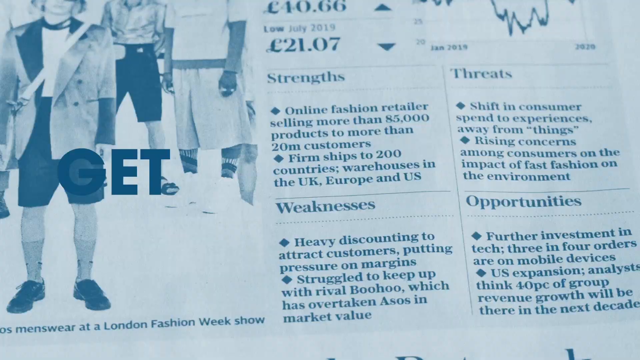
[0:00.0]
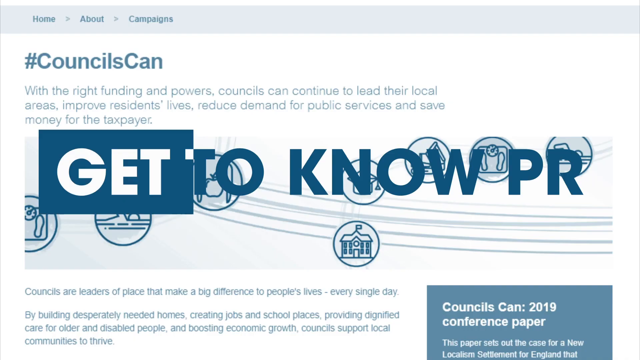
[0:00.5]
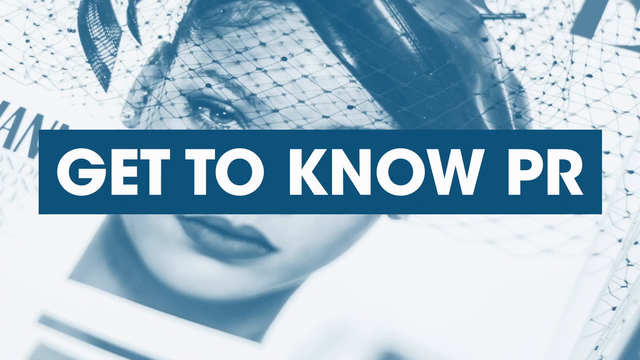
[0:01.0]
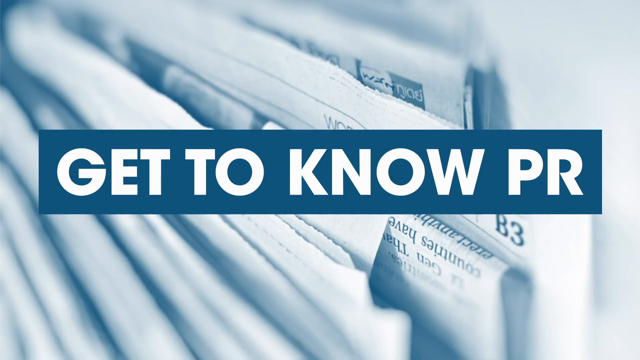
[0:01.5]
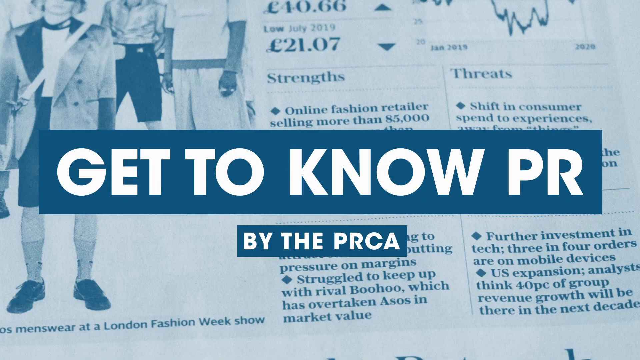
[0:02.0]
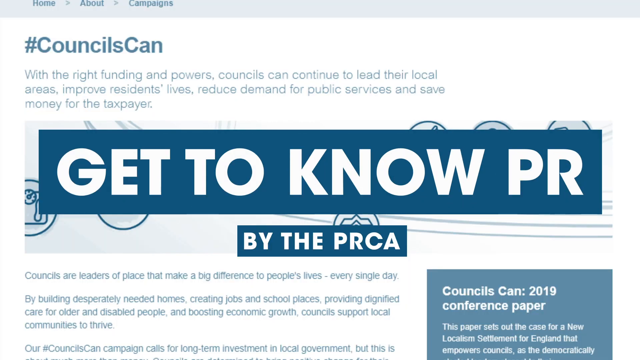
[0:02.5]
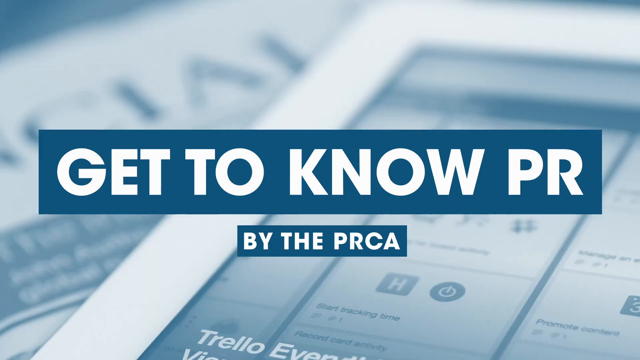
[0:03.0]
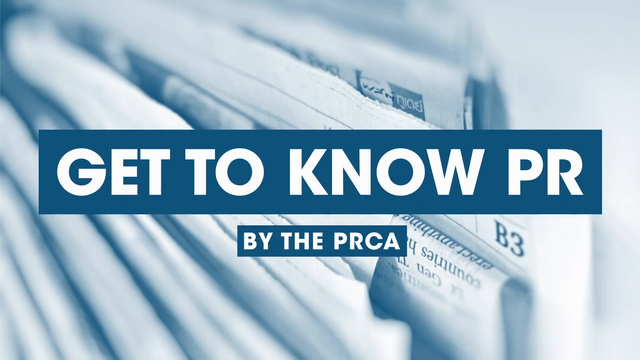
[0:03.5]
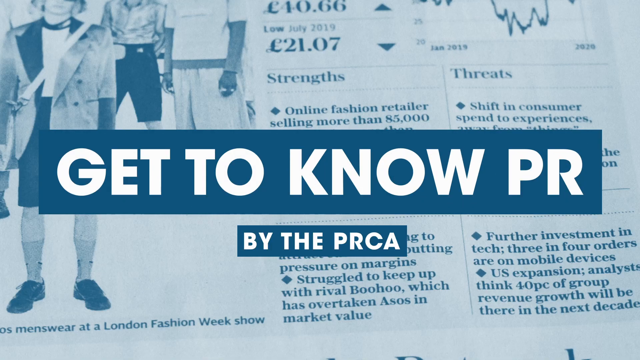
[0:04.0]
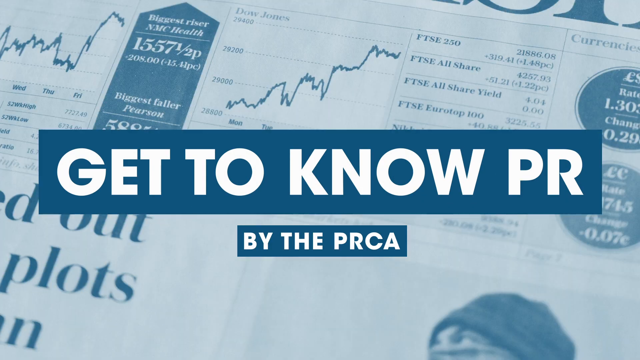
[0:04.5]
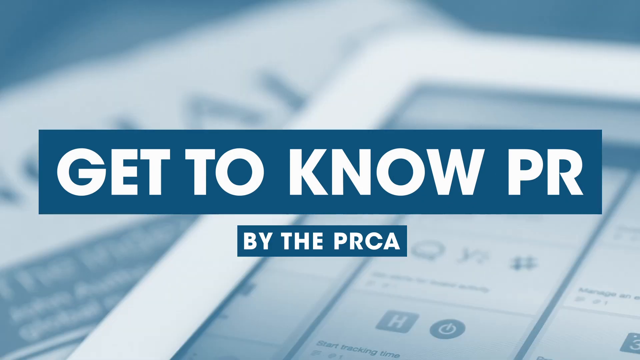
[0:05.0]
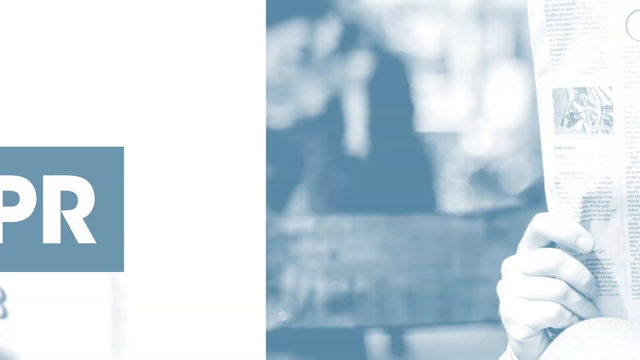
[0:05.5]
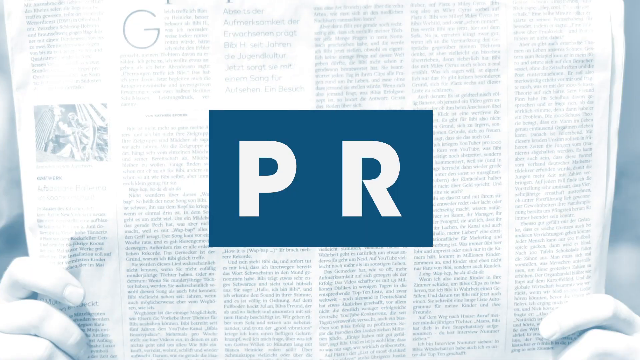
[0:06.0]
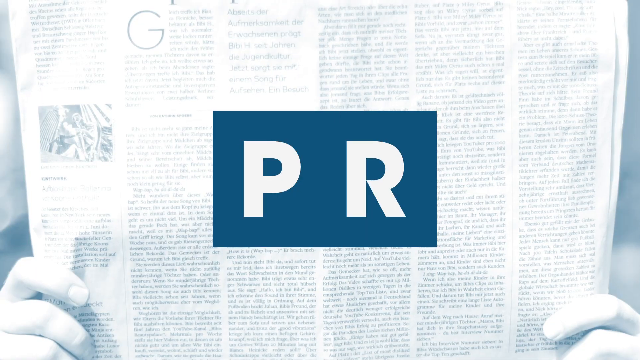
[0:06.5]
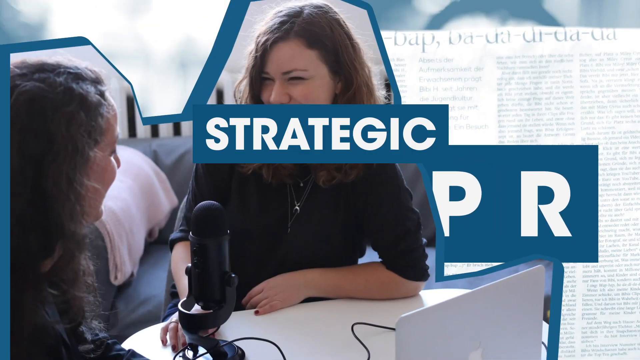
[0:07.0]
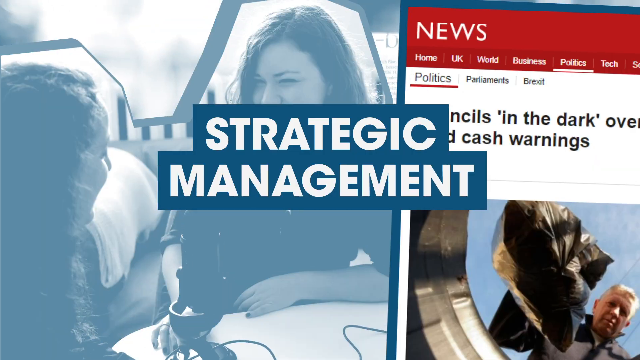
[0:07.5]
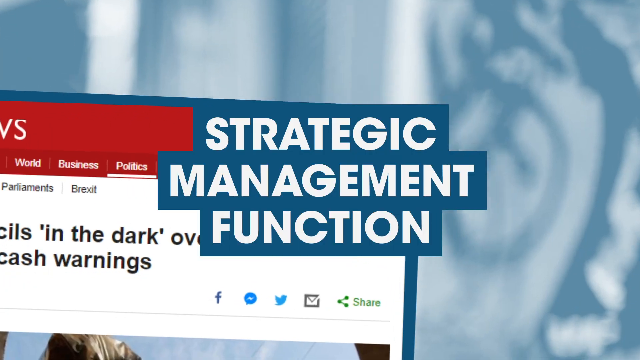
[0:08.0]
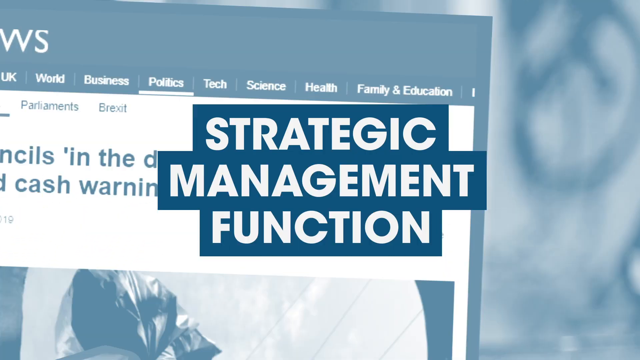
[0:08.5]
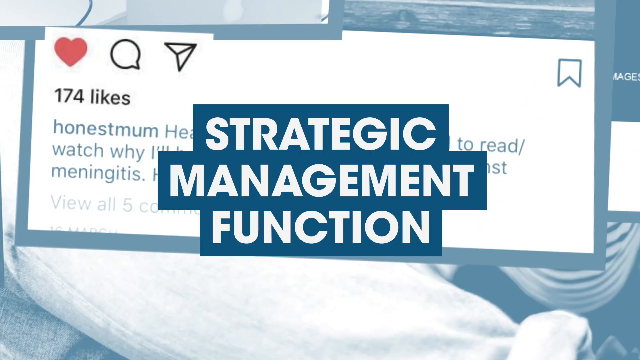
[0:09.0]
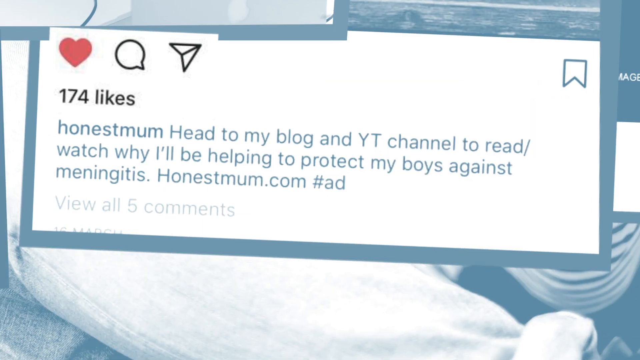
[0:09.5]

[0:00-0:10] The video is about fashion and shows people wearing clothes, shoes, jackets and shorts. On-screen text appears; the first item on the left says "get", and there are prices: £10, £0.66, £21 and £77. Another message on the screen reads "online fashion retailers selling more than 85,000 products to more than 20 million customers", "firm ships to 200 countries", "warehouses in the UK, Europe and US", "weaknesses", "heavy discount attract customers putting pressure on margins", "threats", "shifting consumers' experiences away from things", "rising concerns among consumers on the impact of fast fashion in the environment", "opportunities for further investment in tech", "3 in 4 orders are on mobile devices" and "US expansions".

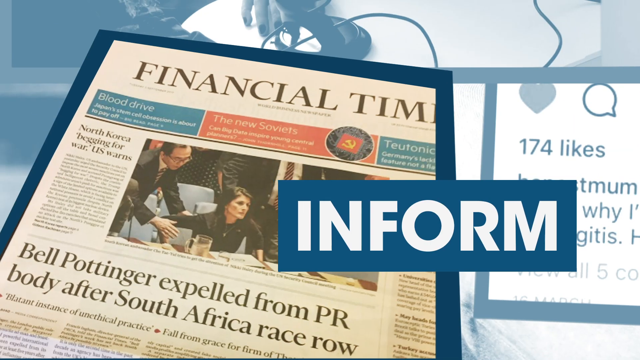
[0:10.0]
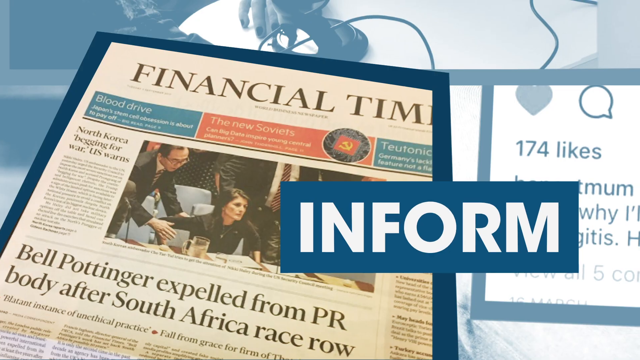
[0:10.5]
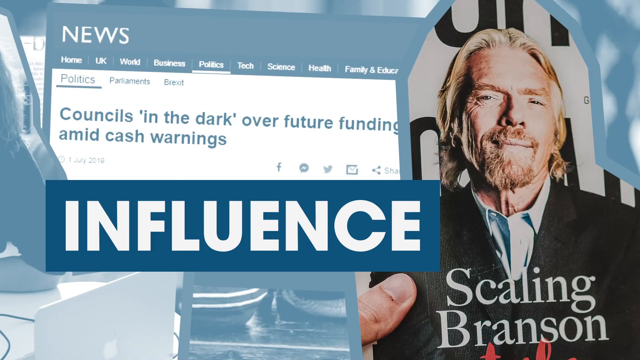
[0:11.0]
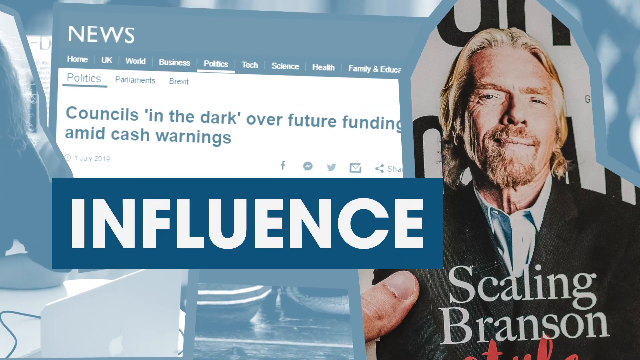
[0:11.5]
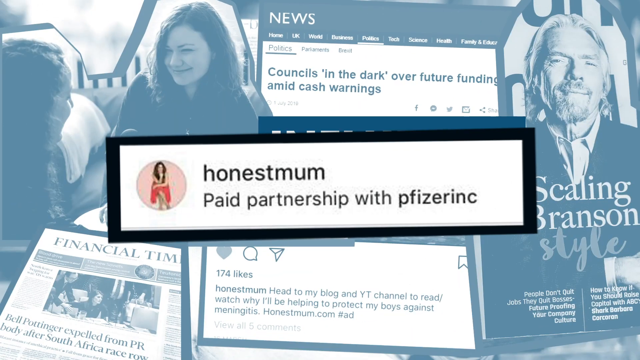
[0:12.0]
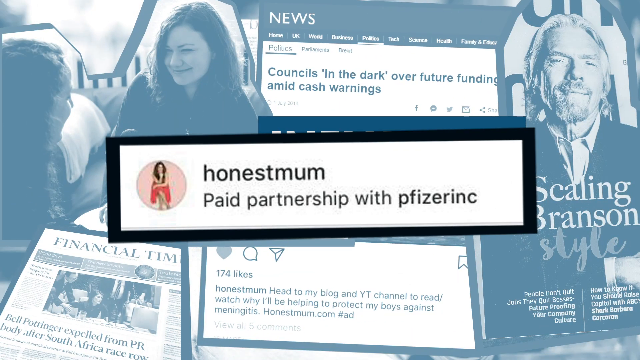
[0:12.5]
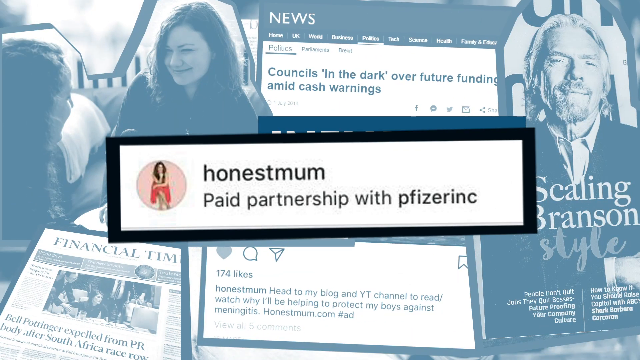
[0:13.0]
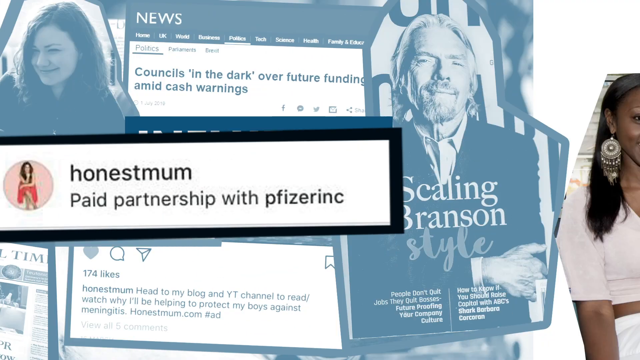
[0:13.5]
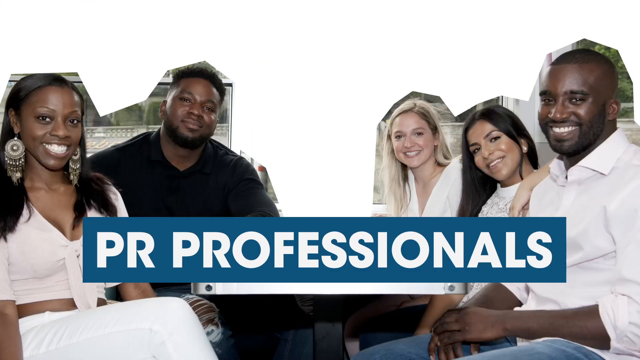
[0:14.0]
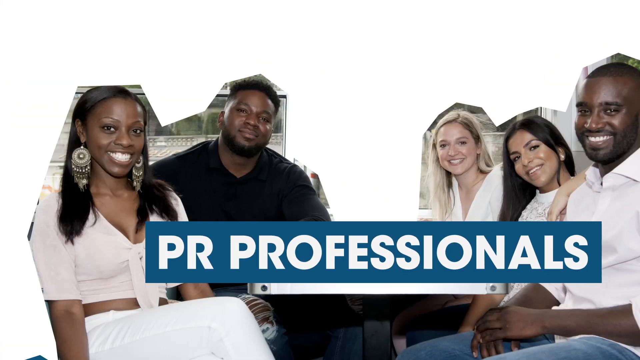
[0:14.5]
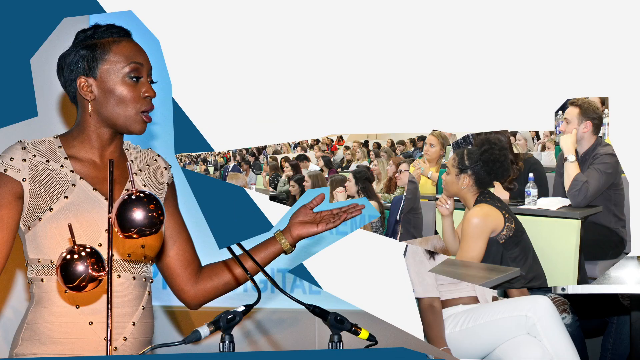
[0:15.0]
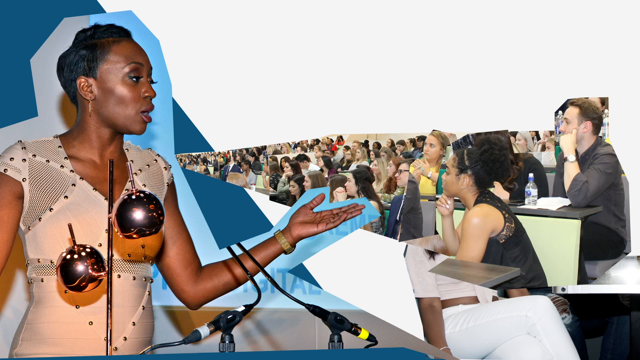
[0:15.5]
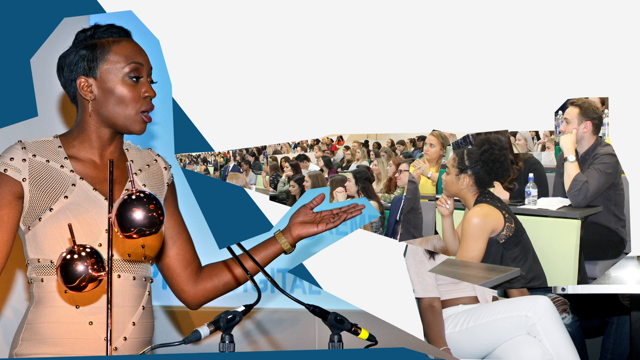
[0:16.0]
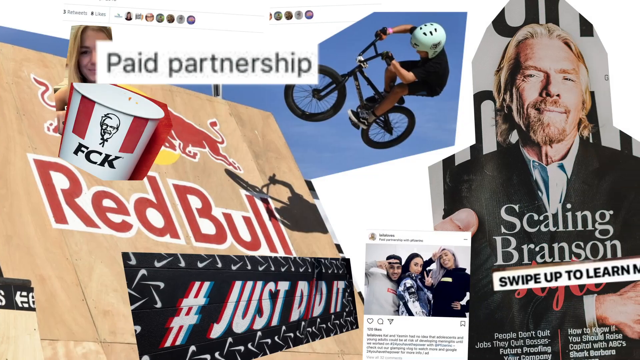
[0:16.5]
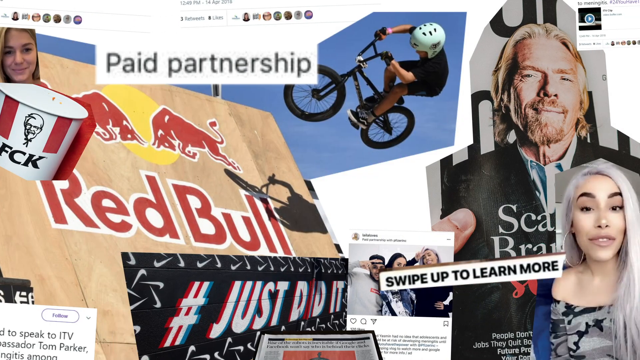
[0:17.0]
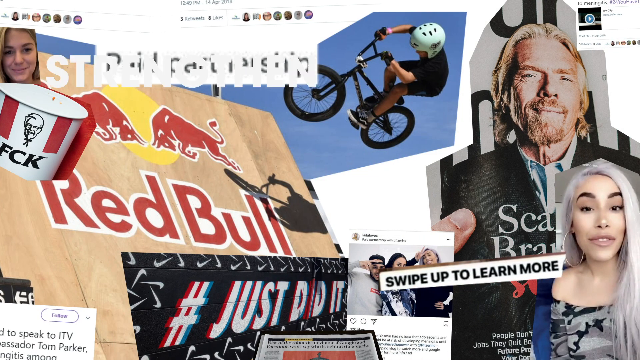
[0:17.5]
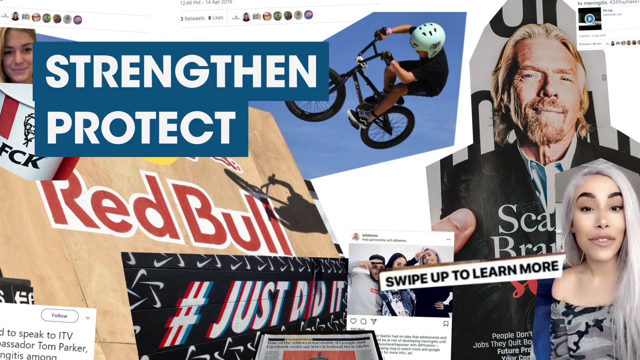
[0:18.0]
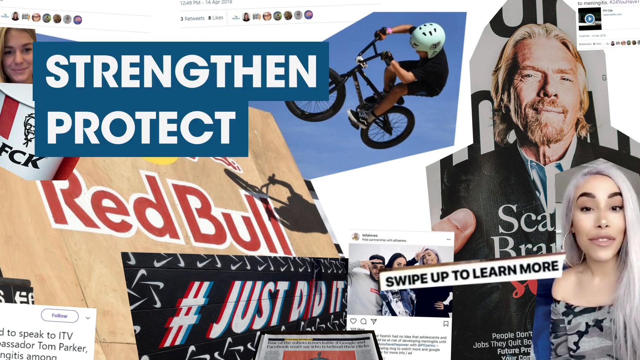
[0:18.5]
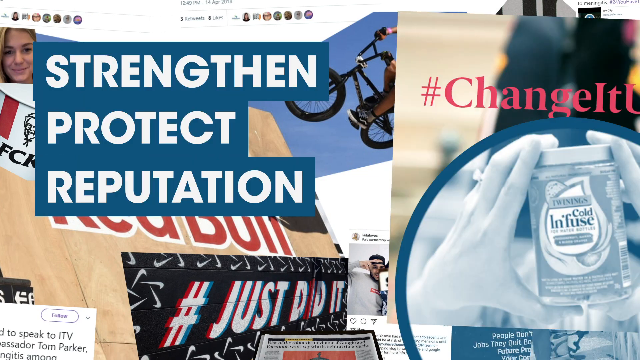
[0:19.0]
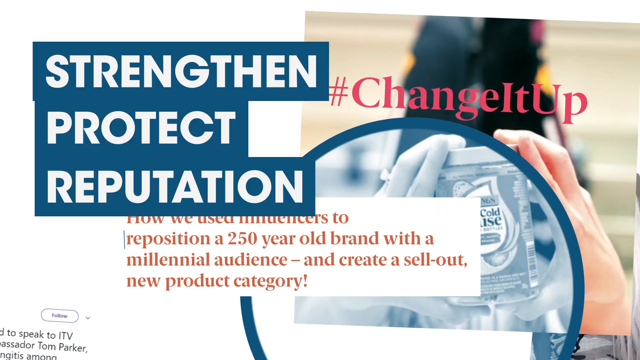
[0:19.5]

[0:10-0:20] A flashing Red Bull advert appears with a message beginning "strengthen, protect". Footage shows Red Bull riders doing stunts on a bicycle; one wears black clothes and a white helmet. On the right of the screen there are a man and a woman, and a message says "sweep up to learn more". Below the Red Bull sign a message says "#just do it", and there is a picture of a packet of KFC. A message then appears on the screen that says "strengthen, protect reputation change it up how we use".